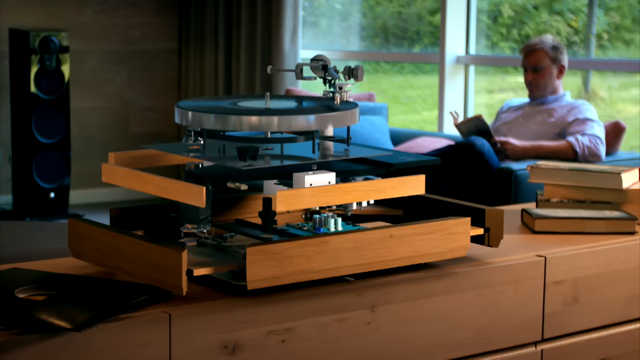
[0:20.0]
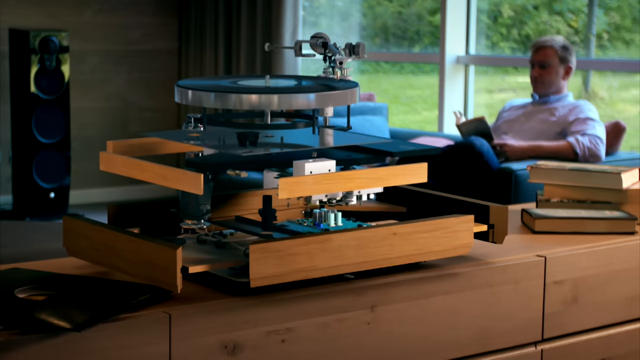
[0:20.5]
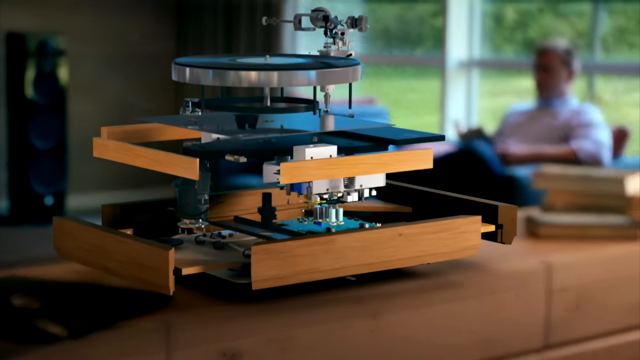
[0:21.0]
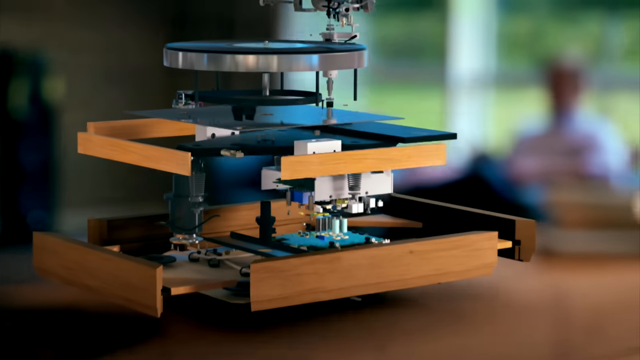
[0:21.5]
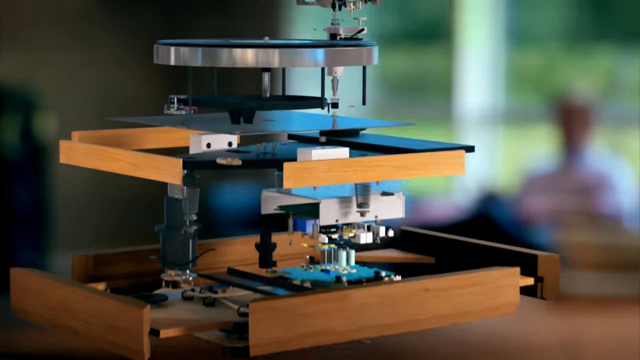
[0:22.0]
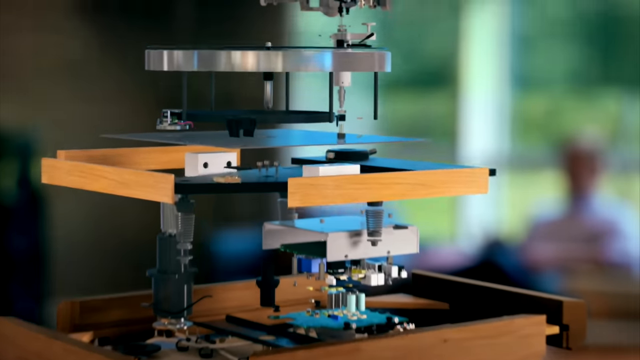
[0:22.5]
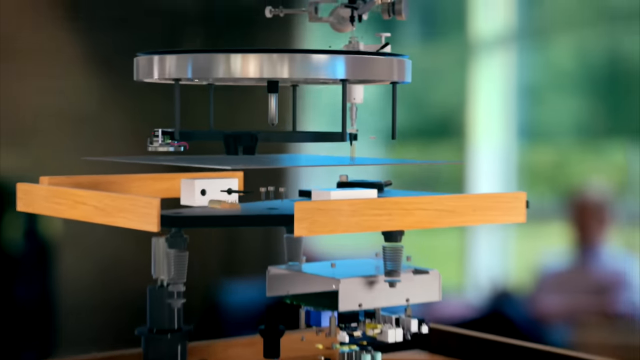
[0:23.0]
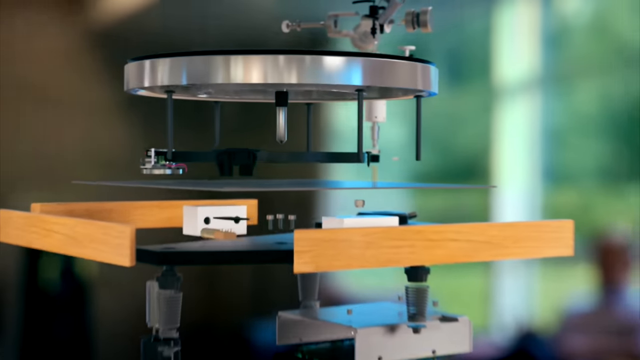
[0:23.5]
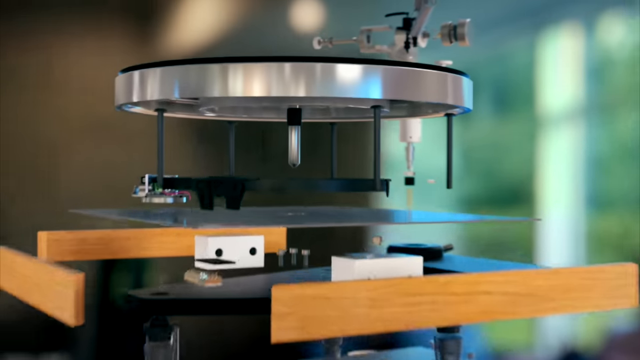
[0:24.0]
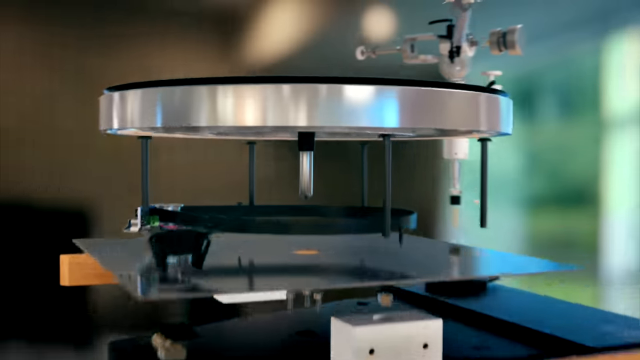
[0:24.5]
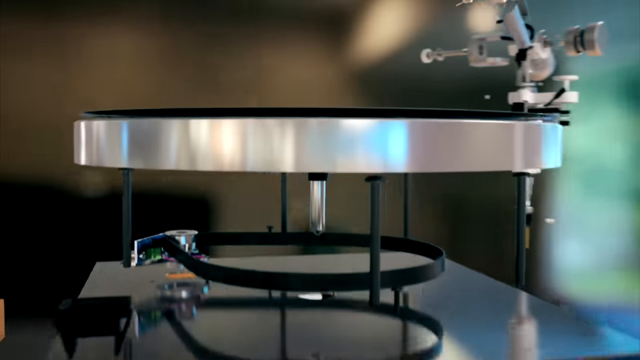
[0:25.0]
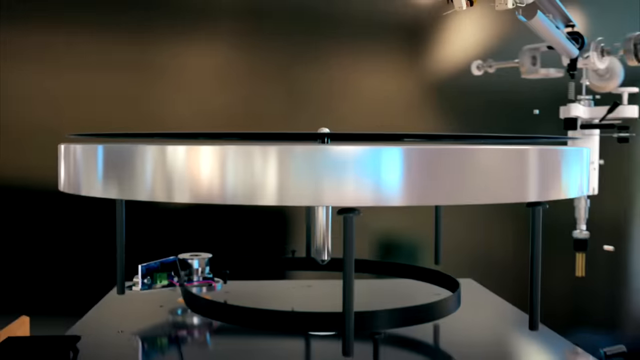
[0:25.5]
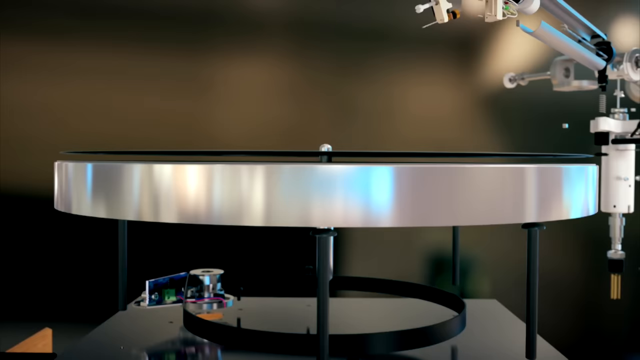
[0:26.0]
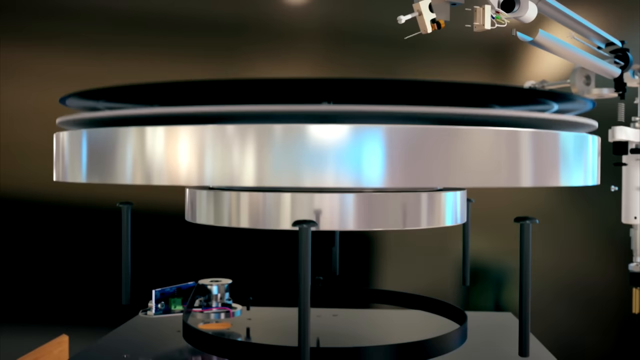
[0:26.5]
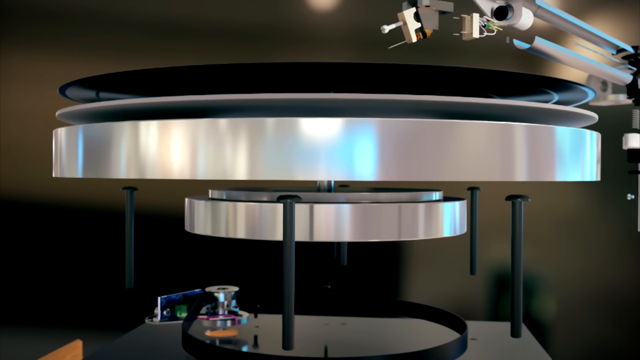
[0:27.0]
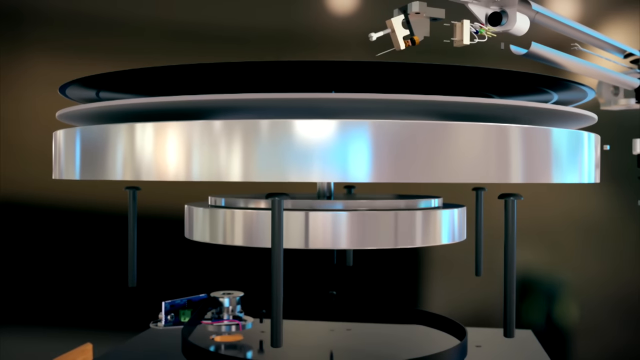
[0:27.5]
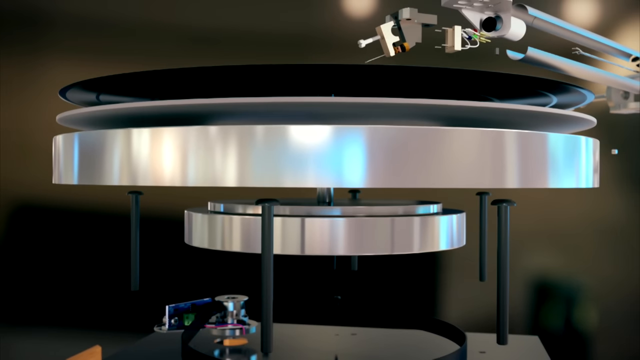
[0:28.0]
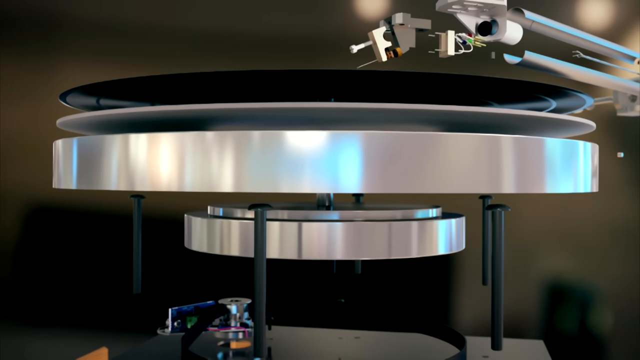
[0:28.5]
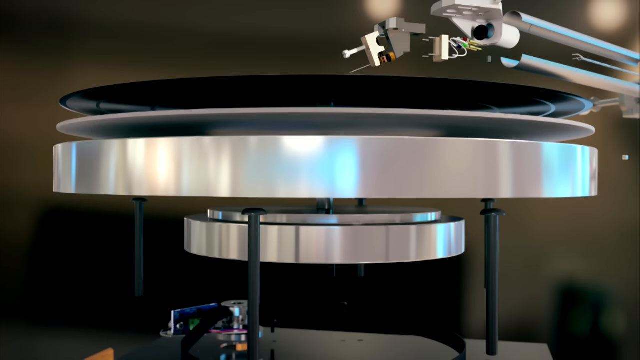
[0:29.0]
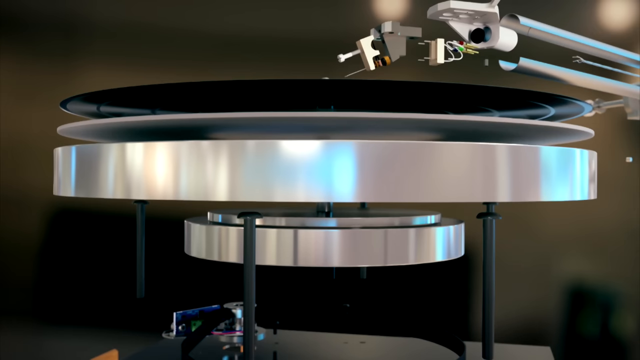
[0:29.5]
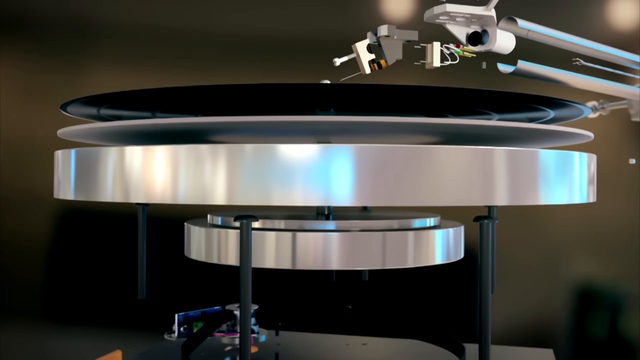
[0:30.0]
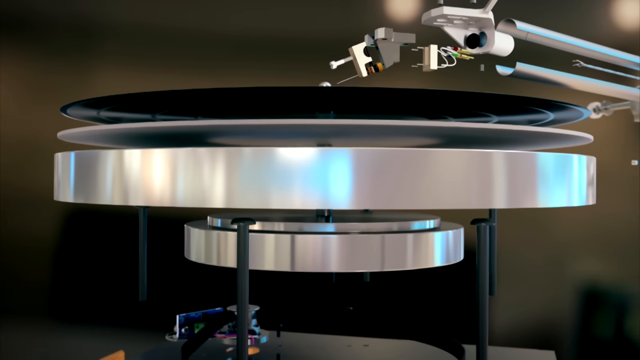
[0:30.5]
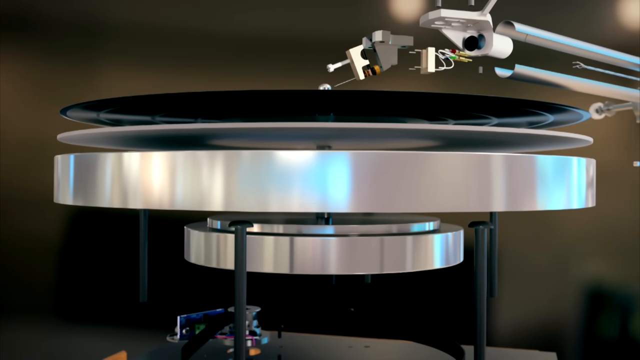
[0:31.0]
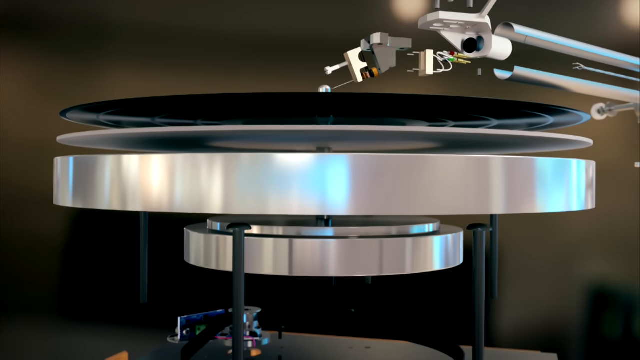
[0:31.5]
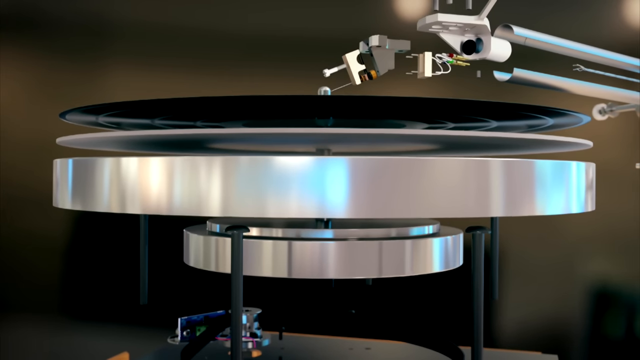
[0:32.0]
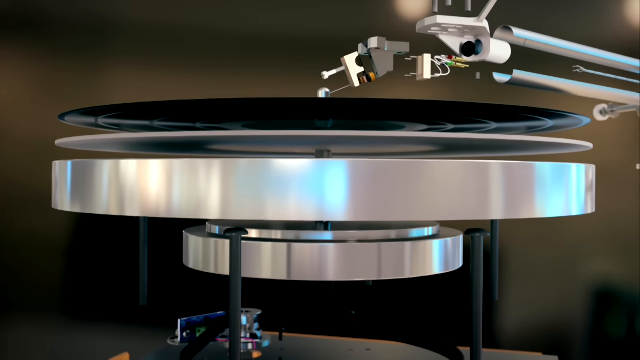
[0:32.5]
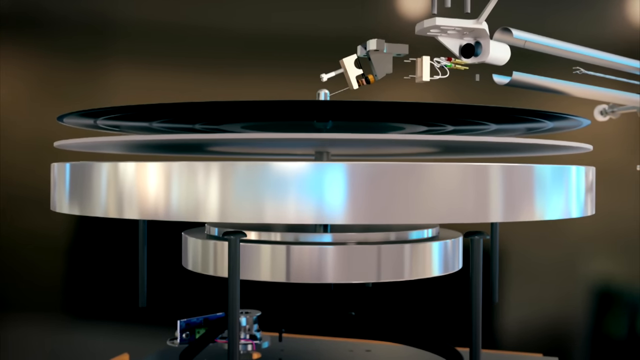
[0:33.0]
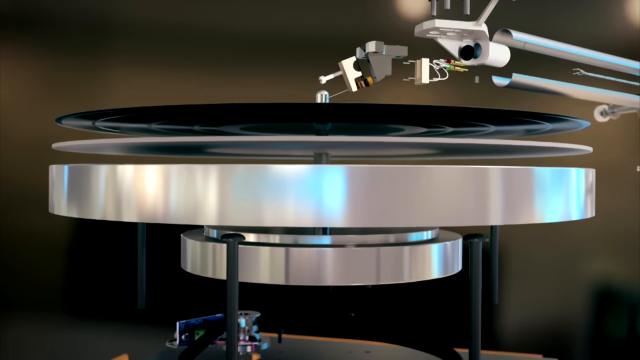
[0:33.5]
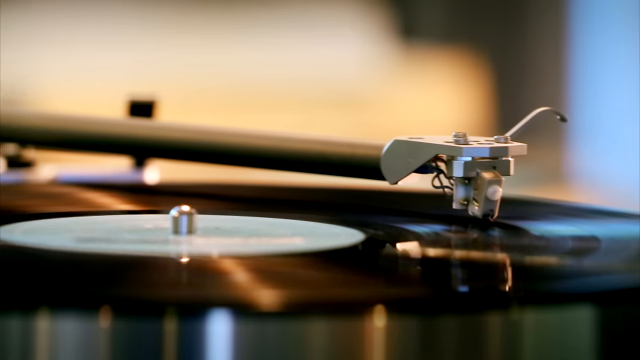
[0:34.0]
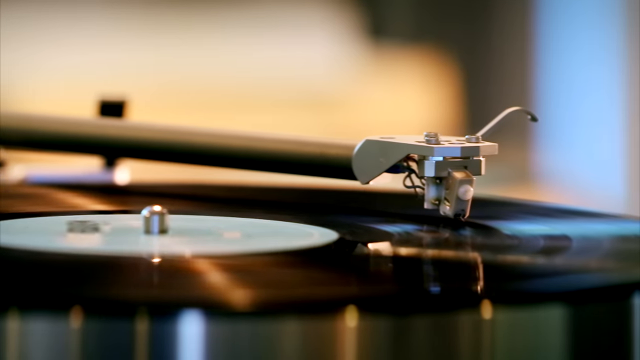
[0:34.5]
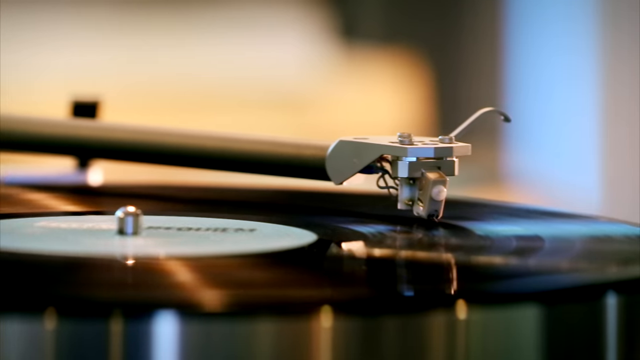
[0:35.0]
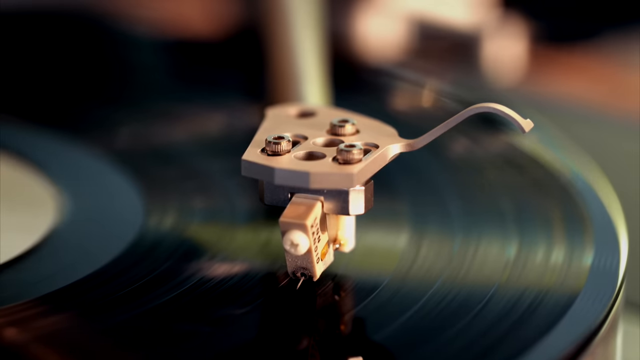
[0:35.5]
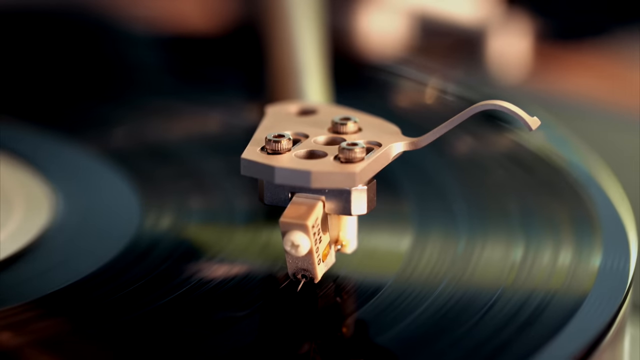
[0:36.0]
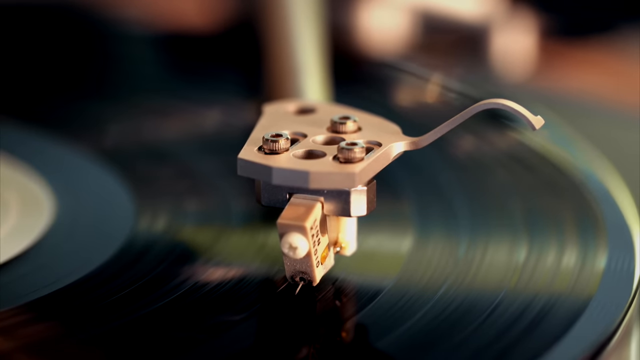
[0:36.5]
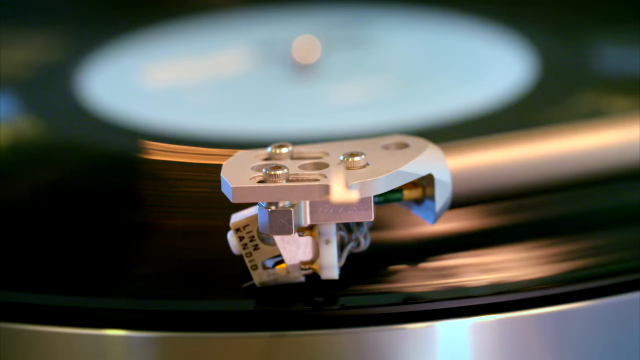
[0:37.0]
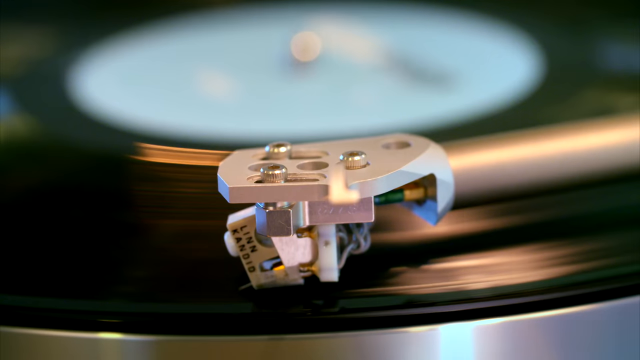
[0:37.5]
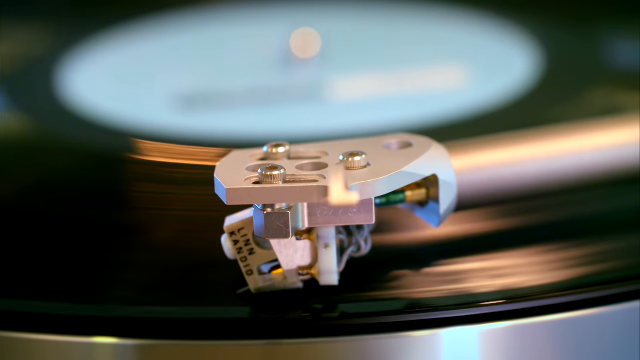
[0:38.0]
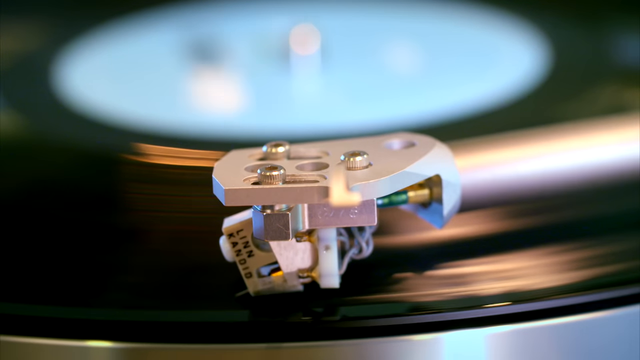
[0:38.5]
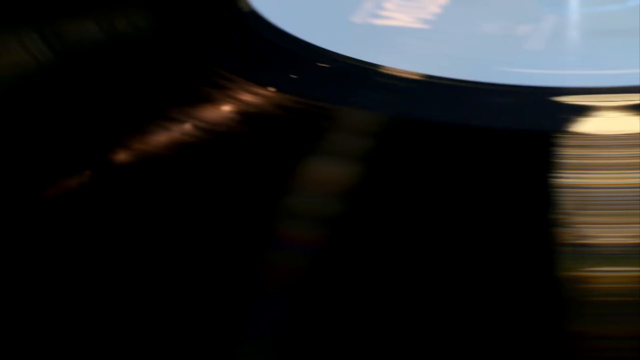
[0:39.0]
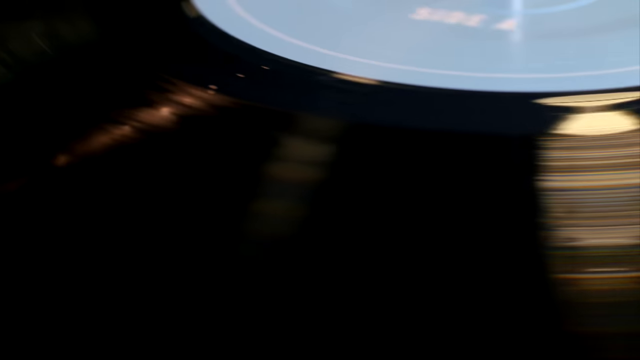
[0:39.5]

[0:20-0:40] The record player is expanded again, very high up, revealing the intricate details of the machinery and technology inside it. The camera zooms in on the top area of the record player, showing the machinery and parts that make it up, and then zooms in on the handle at the top that reads the record as the record spins. The machinery is laid out in a very layered, detailed way, with the components individually visible in compartments. Meanwhile, the man is still reading a book in the very modern, minimalist, warm-colored living room, and the record player is still playing.